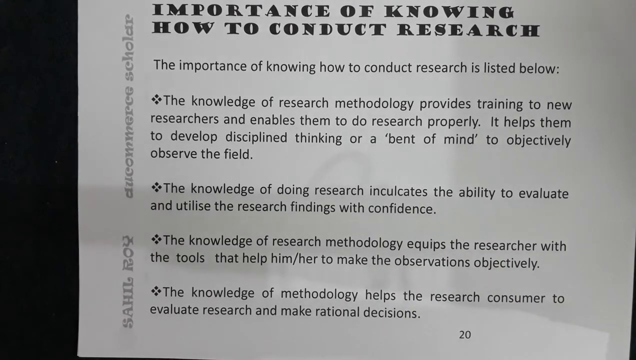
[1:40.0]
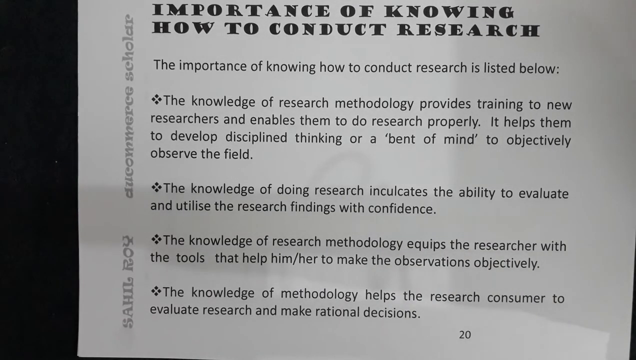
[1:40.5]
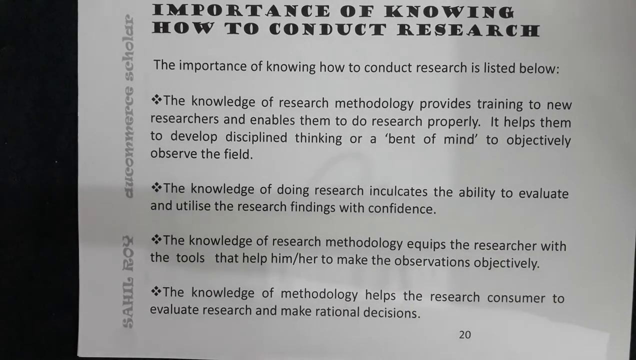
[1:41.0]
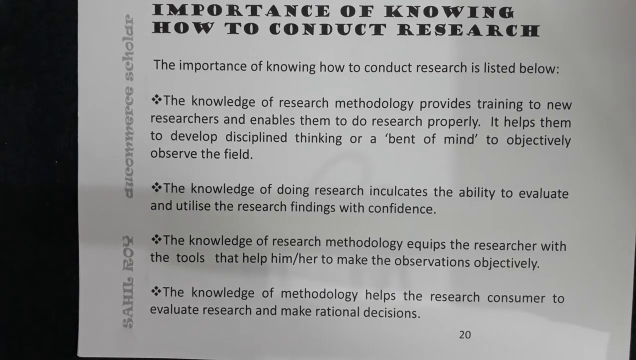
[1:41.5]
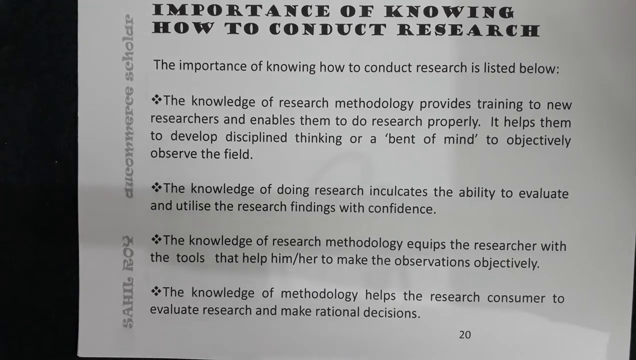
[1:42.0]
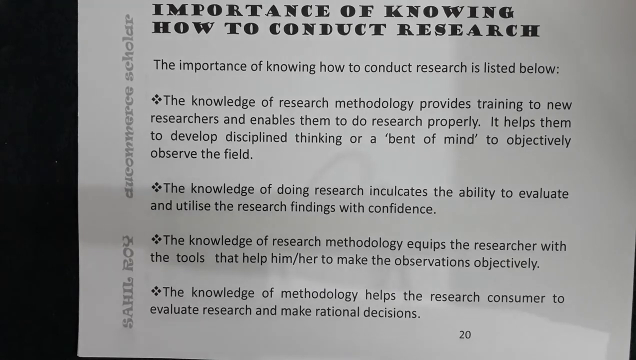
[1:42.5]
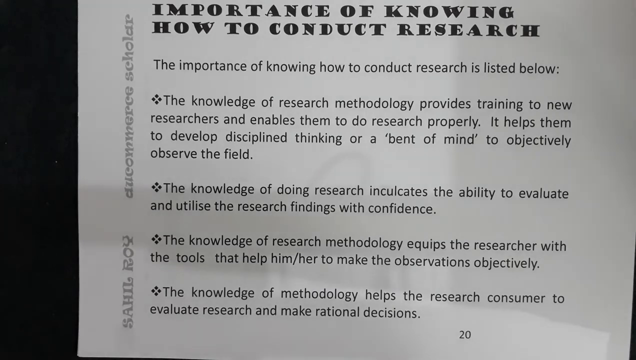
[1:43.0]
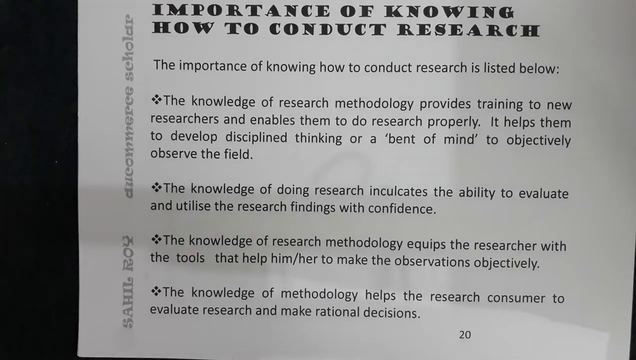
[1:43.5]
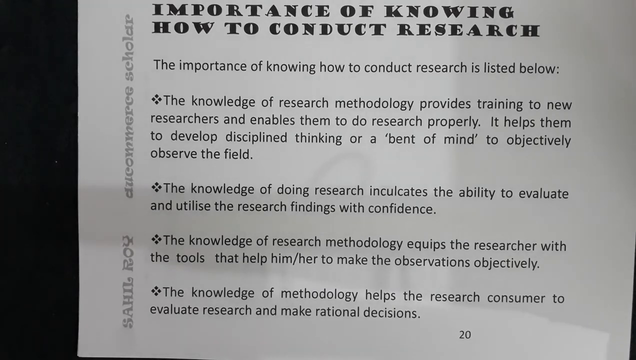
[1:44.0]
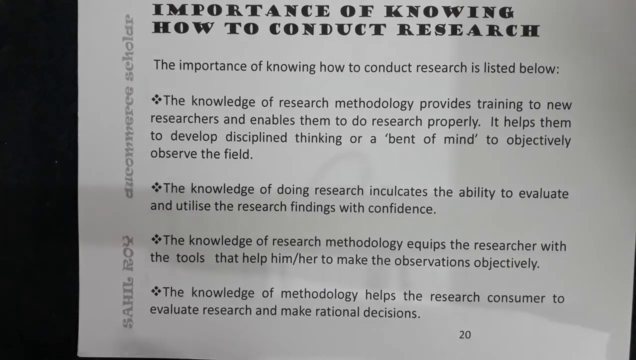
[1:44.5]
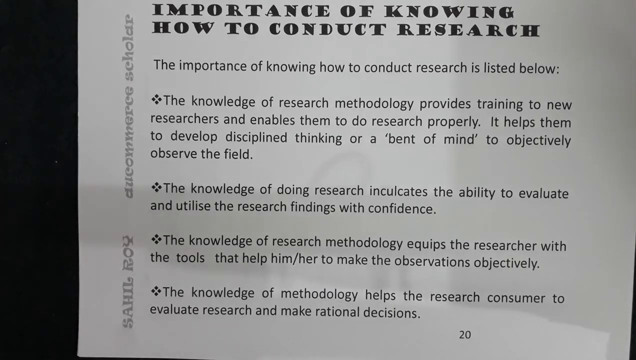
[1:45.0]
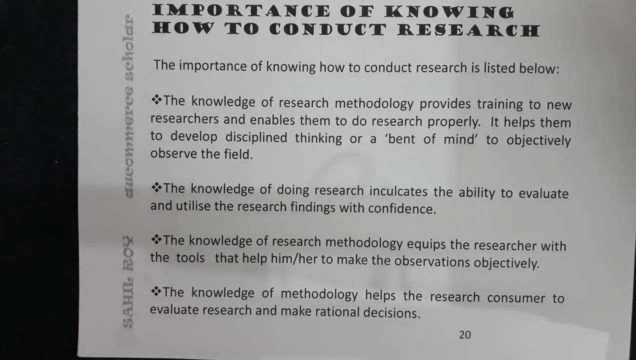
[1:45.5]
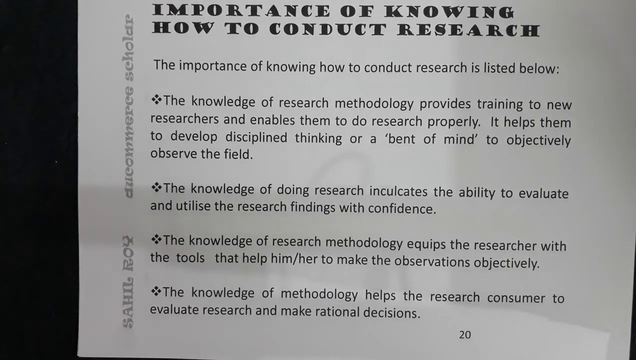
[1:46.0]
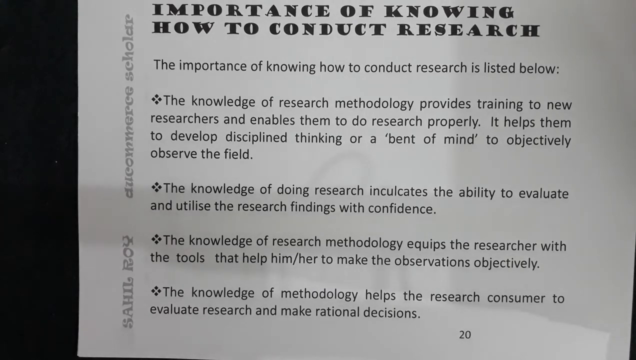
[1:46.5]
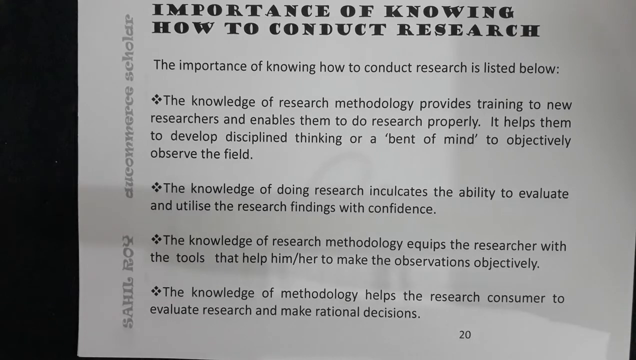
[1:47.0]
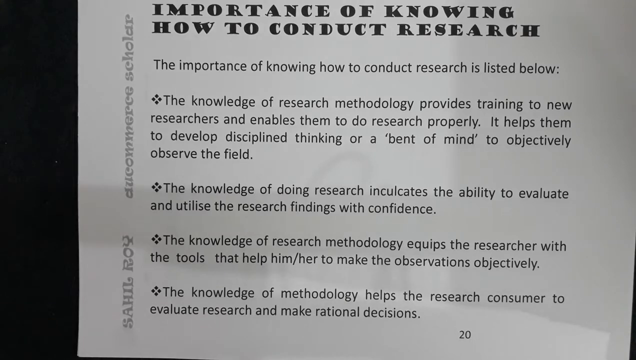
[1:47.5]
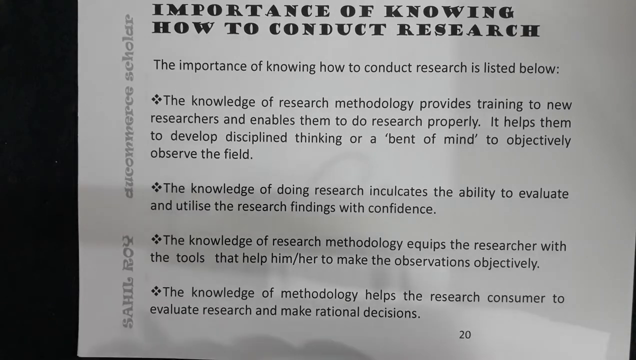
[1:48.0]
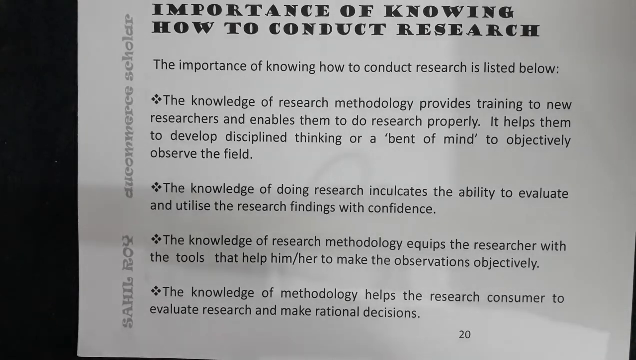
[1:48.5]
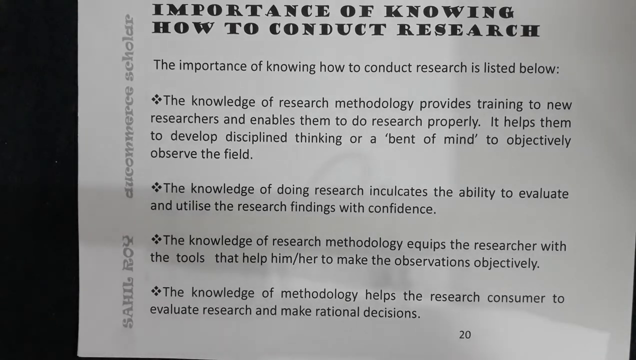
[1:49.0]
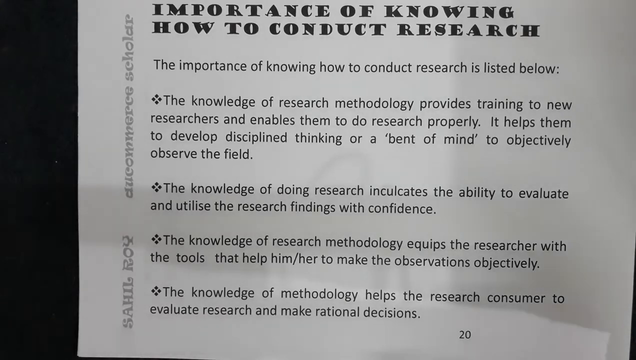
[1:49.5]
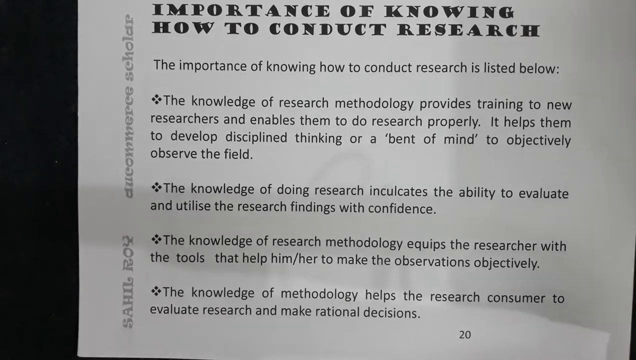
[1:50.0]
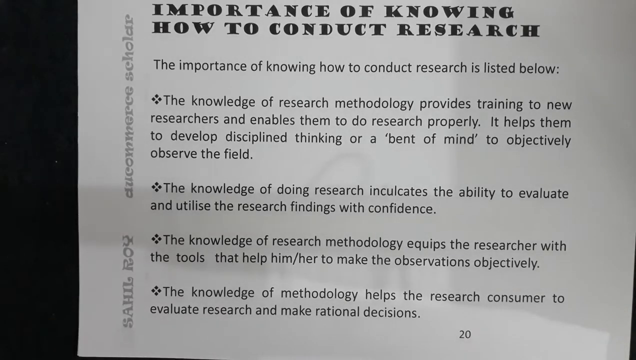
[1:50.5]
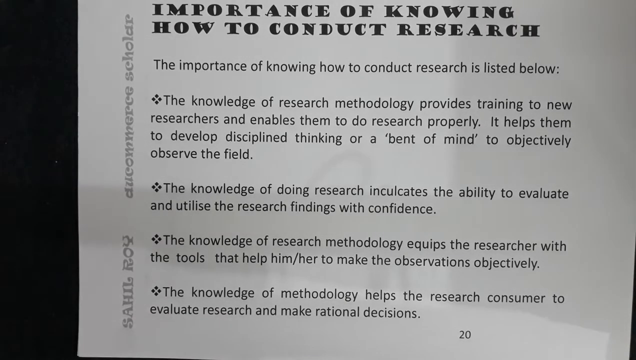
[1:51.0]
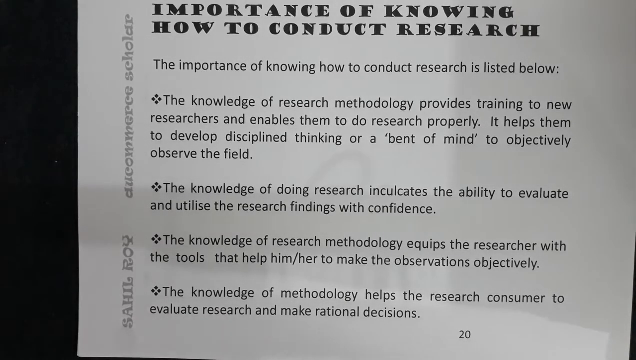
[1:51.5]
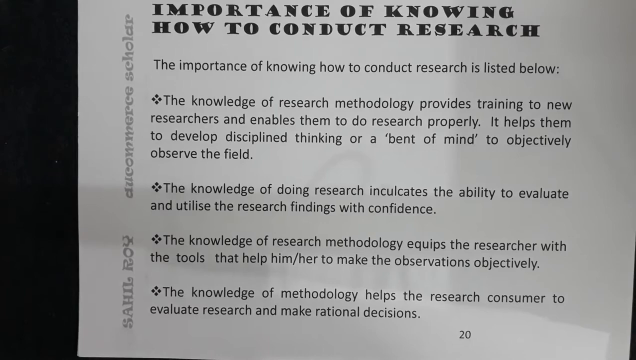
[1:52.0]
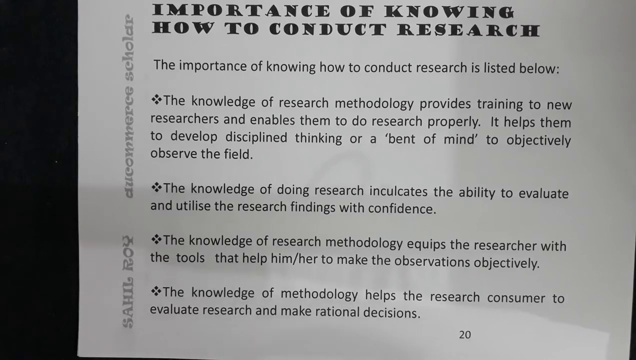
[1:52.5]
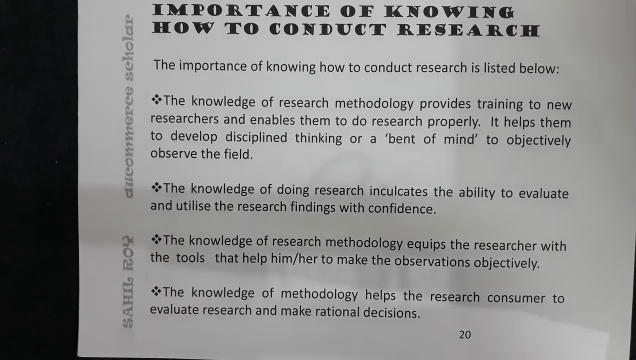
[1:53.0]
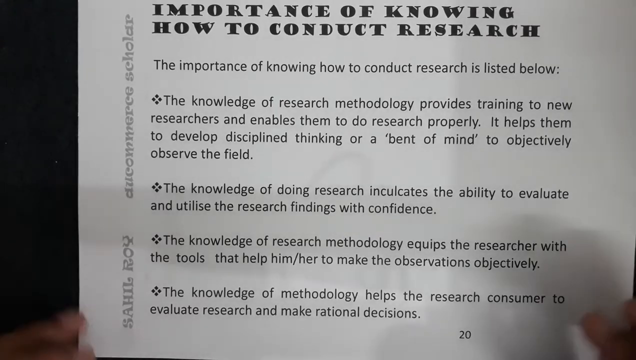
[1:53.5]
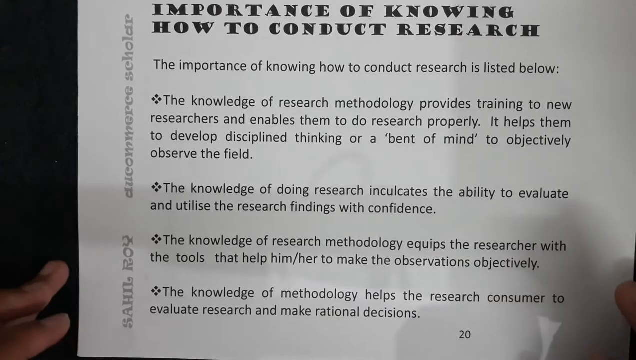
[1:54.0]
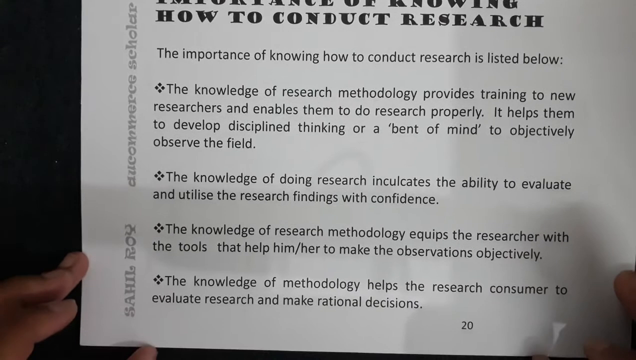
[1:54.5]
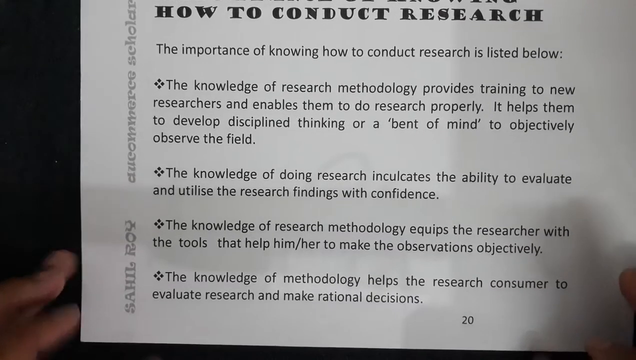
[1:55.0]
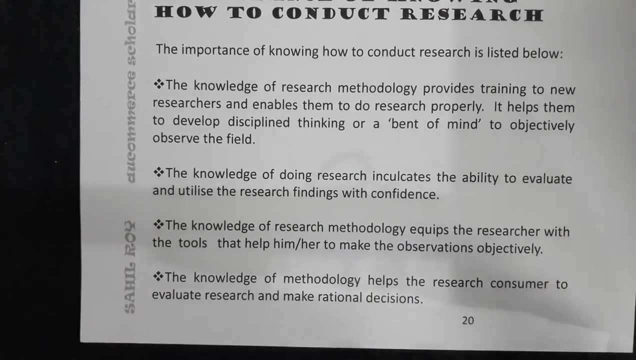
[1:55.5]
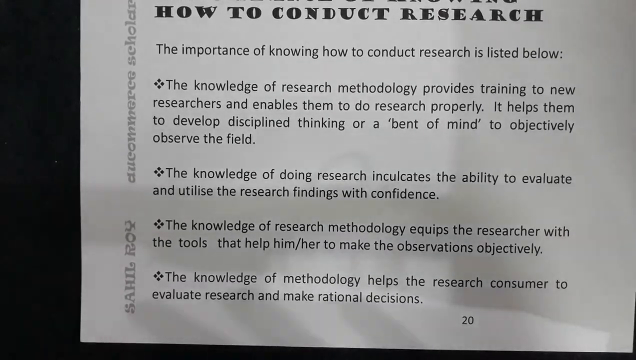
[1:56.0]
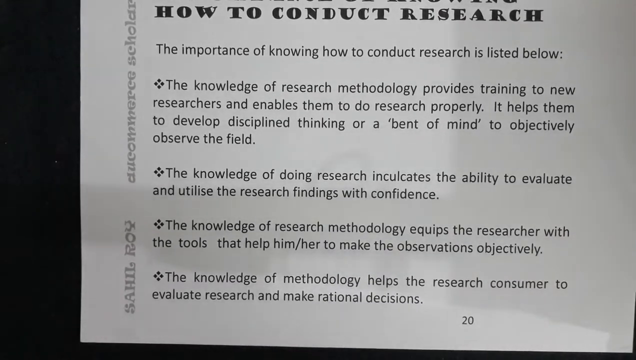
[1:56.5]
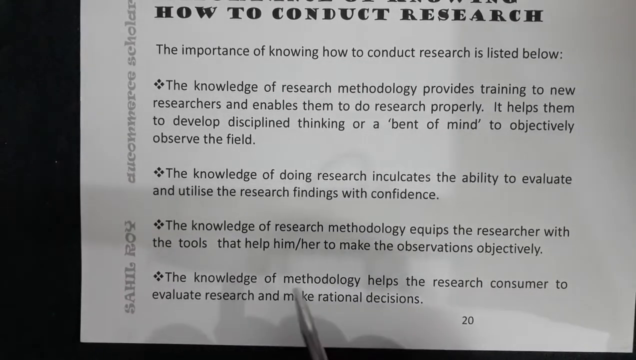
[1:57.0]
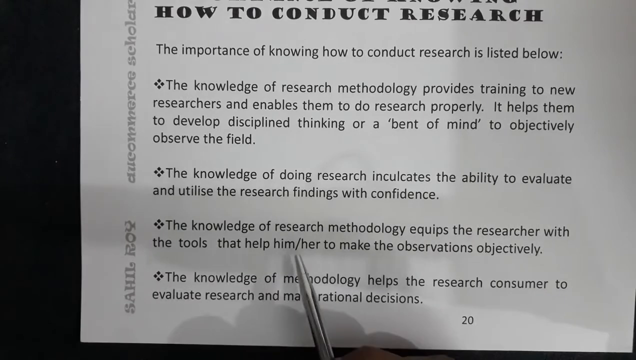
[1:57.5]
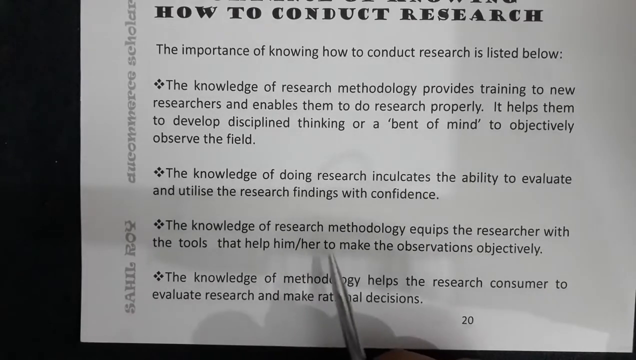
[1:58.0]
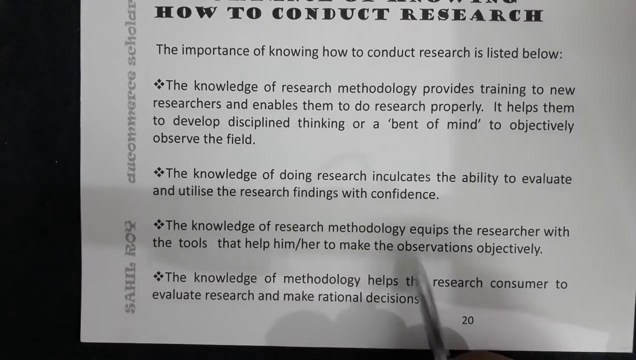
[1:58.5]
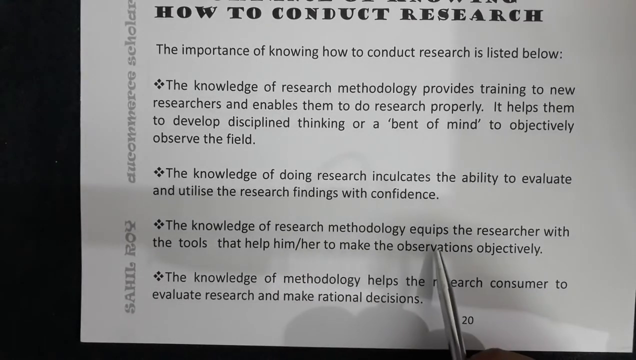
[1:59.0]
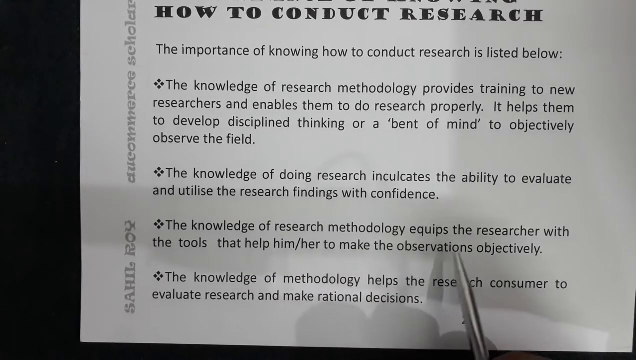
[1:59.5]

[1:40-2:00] A sheet of paper says "the importance of knowing how to do research" in bold at the top, with bullet points about research knowledge below, ending with a statement that it "helps the research consumer to evaluate research and make rational decisions." "Page 20" is at the bottom. A shadow hovers over the paper. Someone adjusts the paper with their hands and points out different words with a silver-looking pen, as if reading off the sheet.